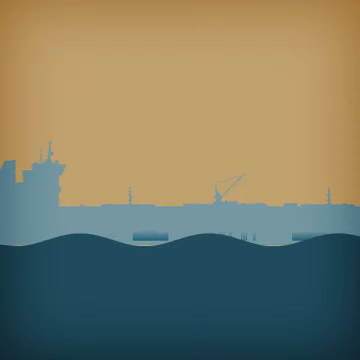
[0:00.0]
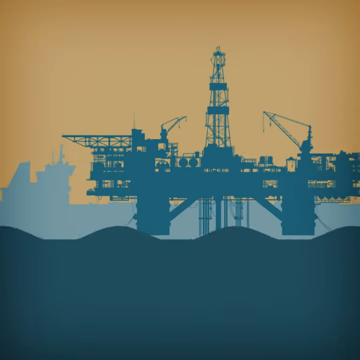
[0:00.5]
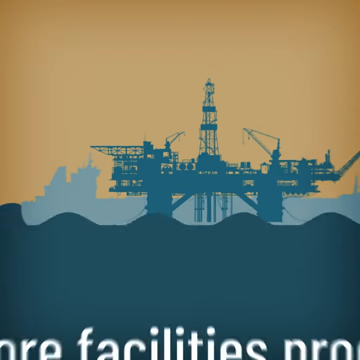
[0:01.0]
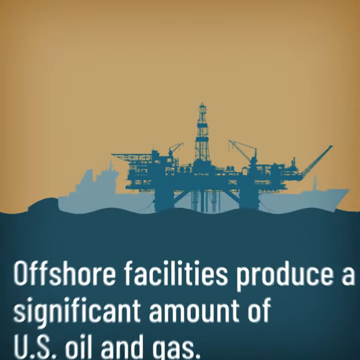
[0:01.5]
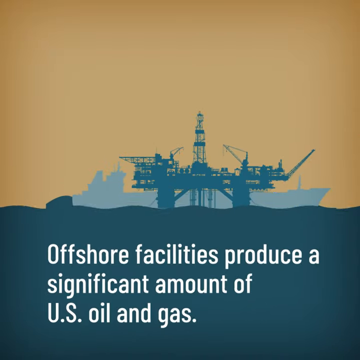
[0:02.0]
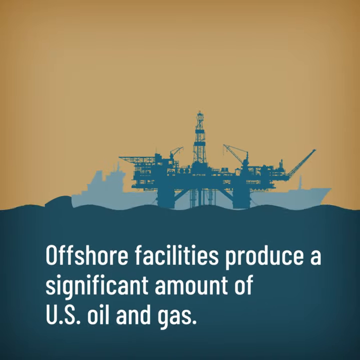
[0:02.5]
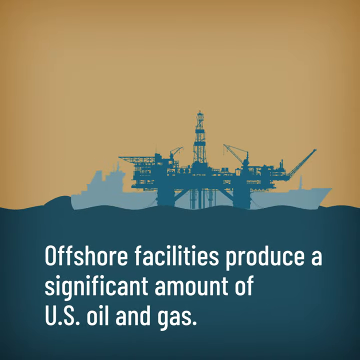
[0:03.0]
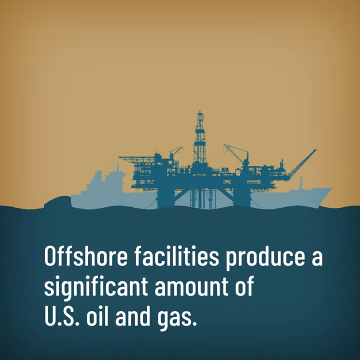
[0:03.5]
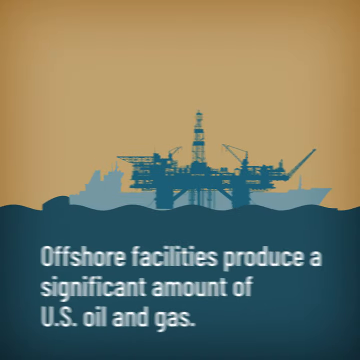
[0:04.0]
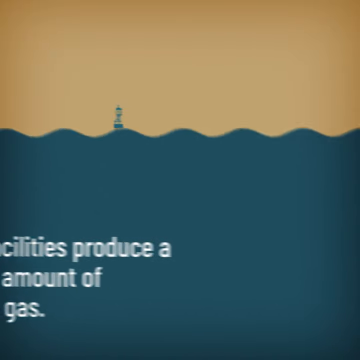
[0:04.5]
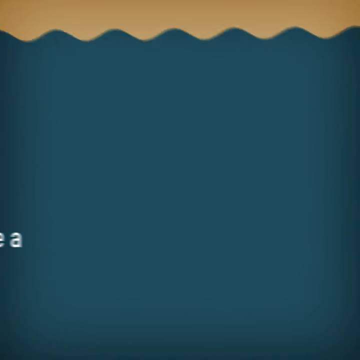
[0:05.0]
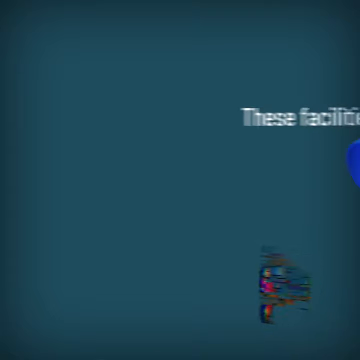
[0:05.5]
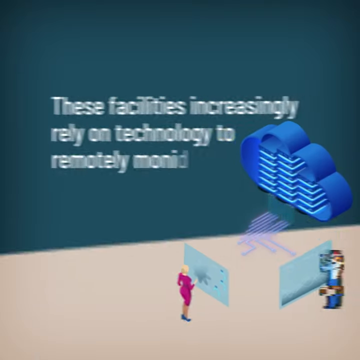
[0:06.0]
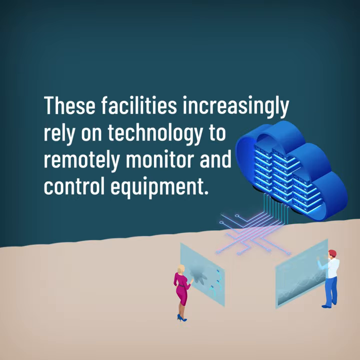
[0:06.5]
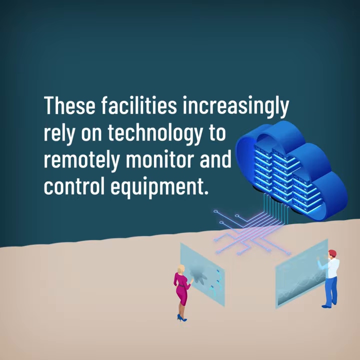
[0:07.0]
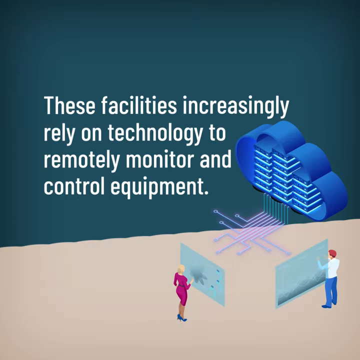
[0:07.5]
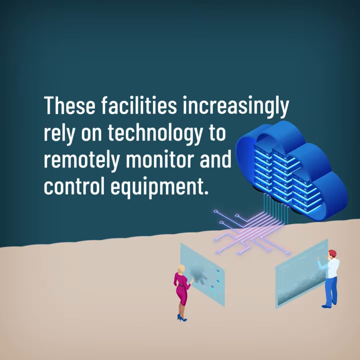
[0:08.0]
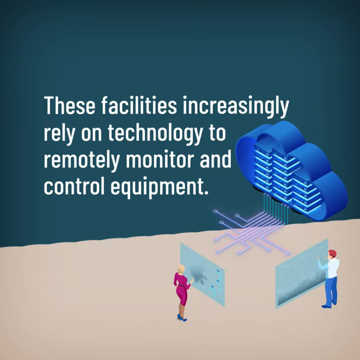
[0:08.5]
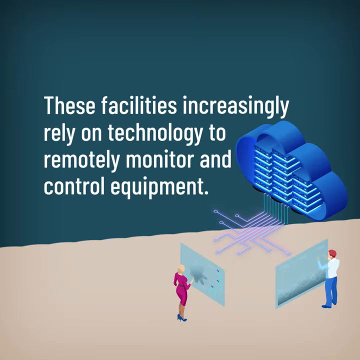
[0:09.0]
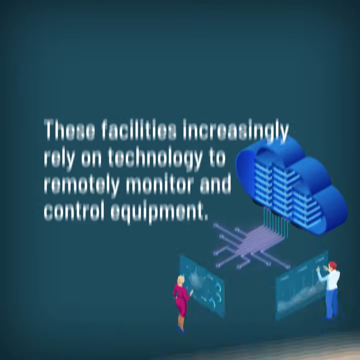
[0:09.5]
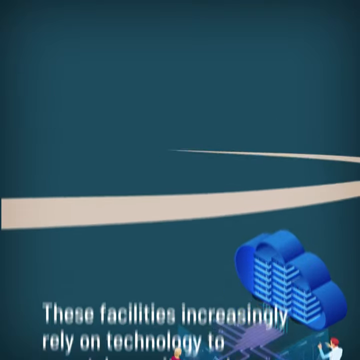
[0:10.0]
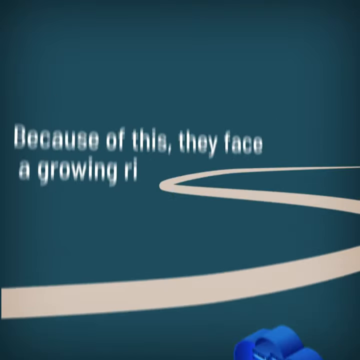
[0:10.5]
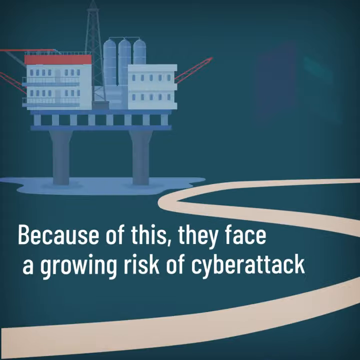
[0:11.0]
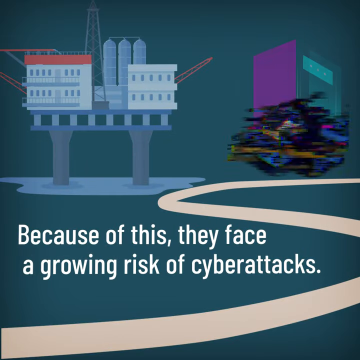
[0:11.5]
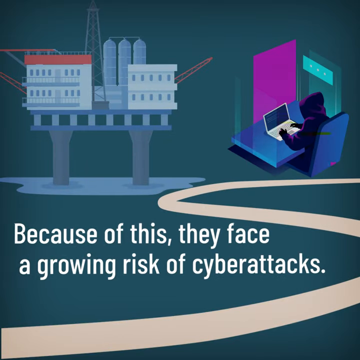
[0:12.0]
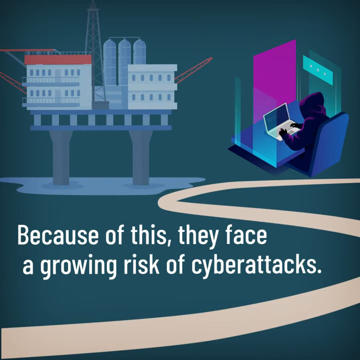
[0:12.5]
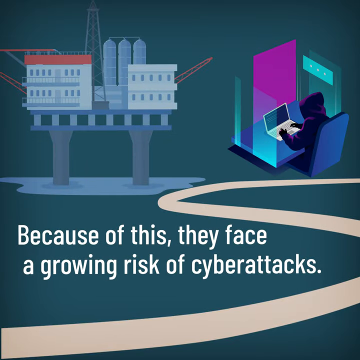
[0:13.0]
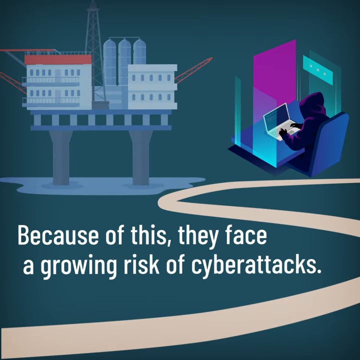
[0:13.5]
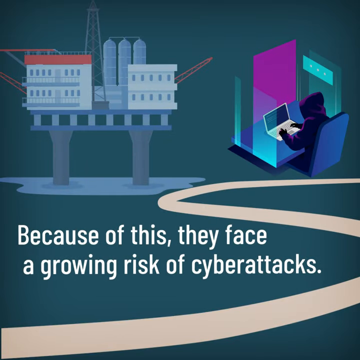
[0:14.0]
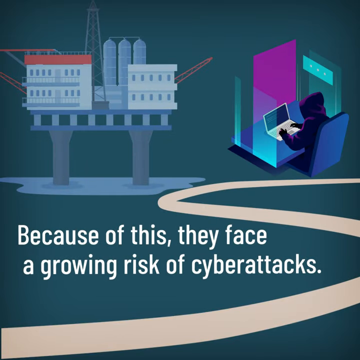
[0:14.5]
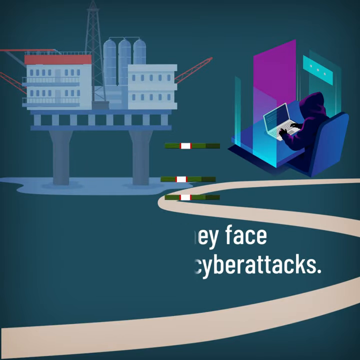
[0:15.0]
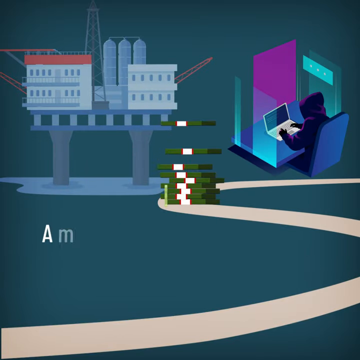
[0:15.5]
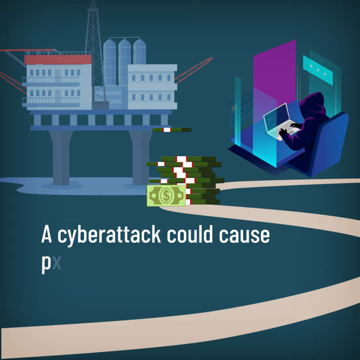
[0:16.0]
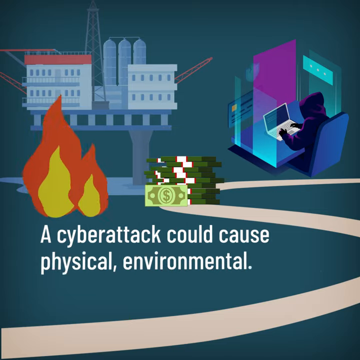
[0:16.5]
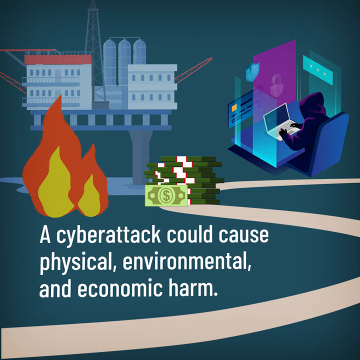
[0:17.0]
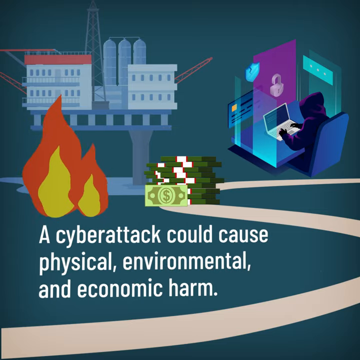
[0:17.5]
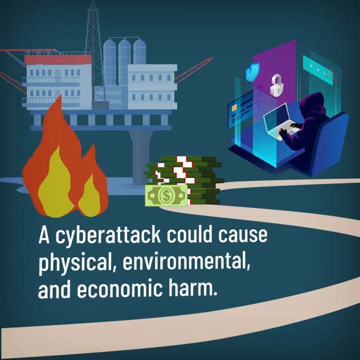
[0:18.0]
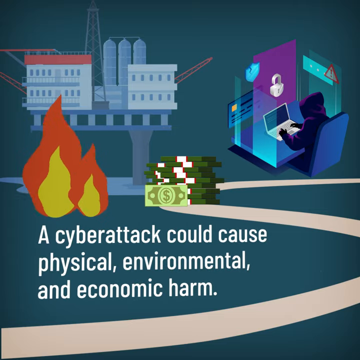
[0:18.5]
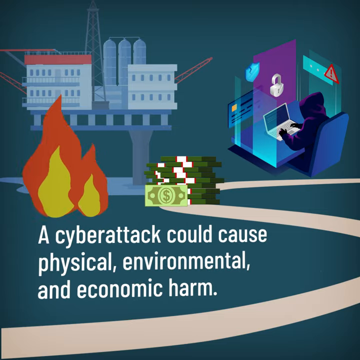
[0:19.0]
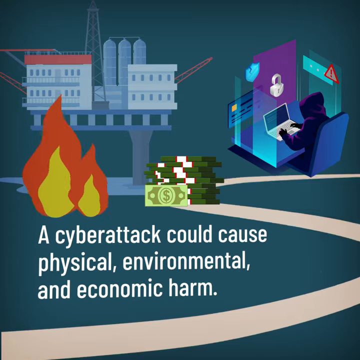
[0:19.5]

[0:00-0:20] An animation opens with an image of what looks like an oil rig floating on top of the water, with the words "offshore facilities produce a significant amount of U.S. oil and gas." It switches to an animation that says "these facilities increasingly rely on technology to remotely monitor and control equipment," showing people at the bottom. An oil rig is then shown again sitting on top of the water, with text that says "because of this they face a growing risk of cyber attacks." There is sort of a little road, and text says "a cyber attack could cause physical, environmental and economic harm." A big stack of money is on the right-hand side, and a big fire is going underneath the oil rig. The animation then switches to a static image showing something industrial.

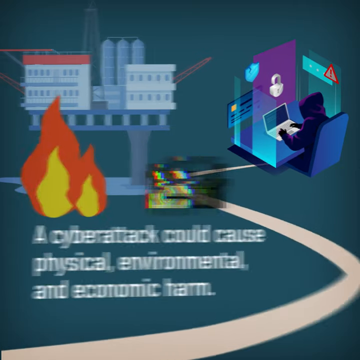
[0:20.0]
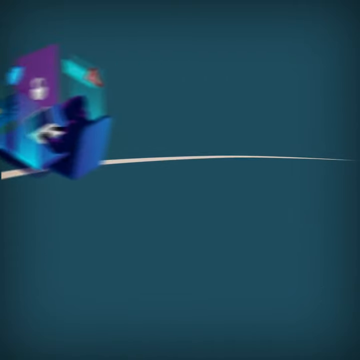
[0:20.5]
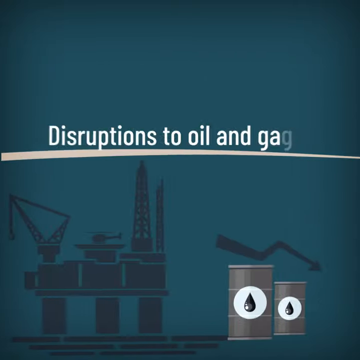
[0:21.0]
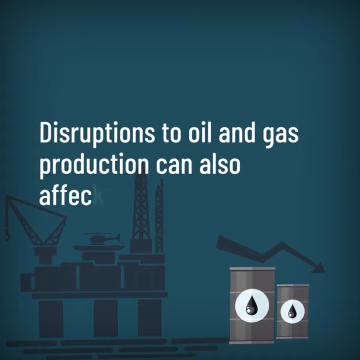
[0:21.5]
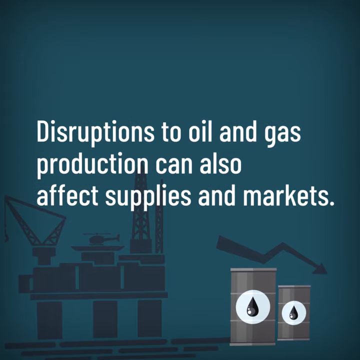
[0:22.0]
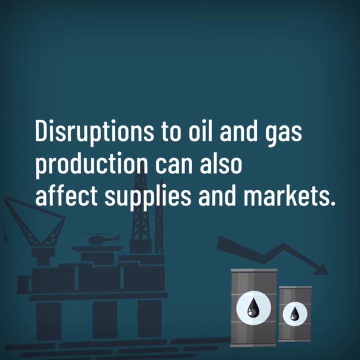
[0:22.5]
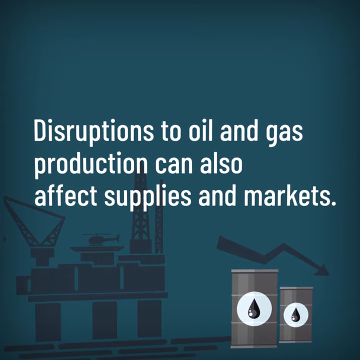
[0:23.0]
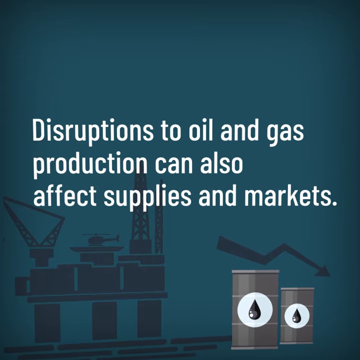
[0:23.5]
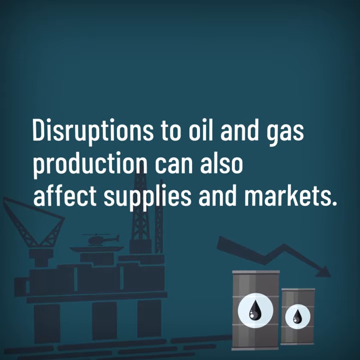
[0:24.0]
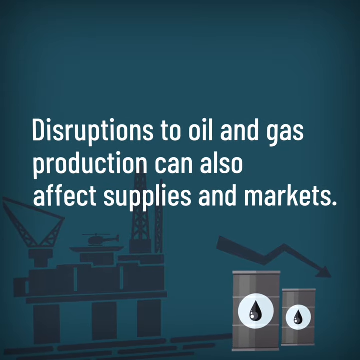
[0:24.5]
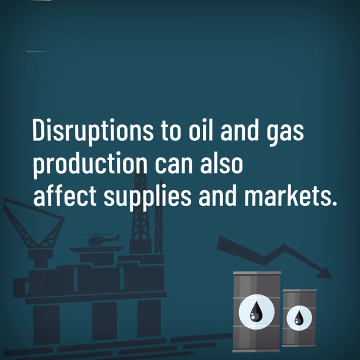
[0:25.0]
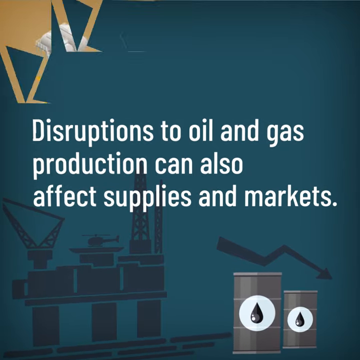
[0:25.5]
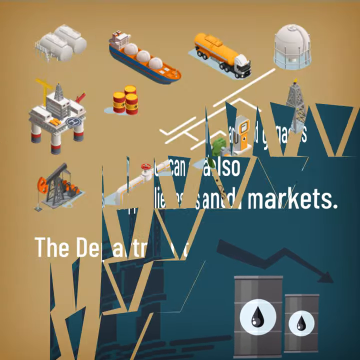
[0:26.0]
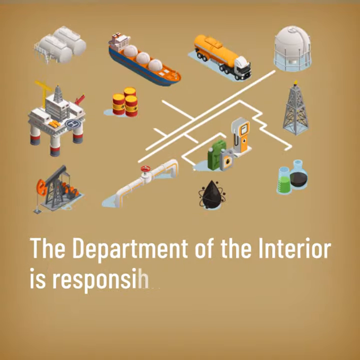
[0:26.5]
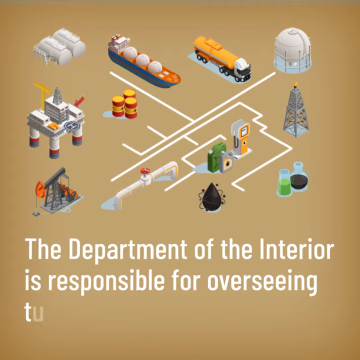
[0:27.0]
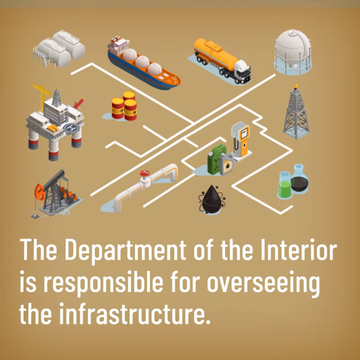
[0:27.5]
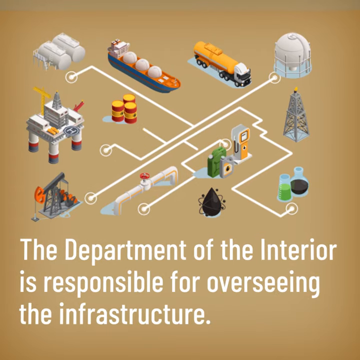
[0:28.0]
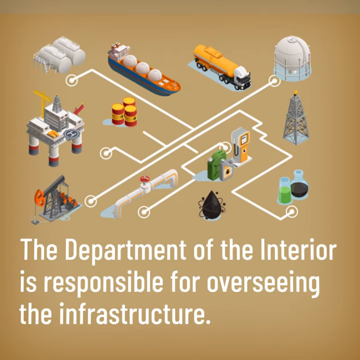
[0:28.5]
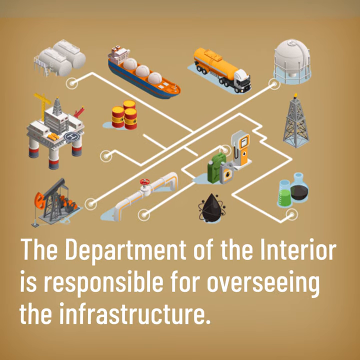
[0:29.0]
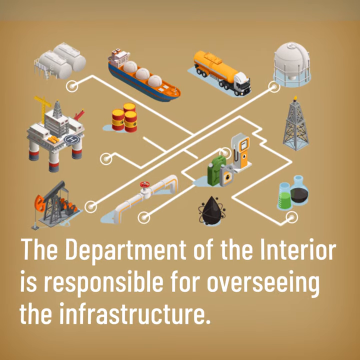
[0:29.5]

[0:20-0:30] The animation continues with text that says "disruptions to oil and gas production can also affect supplies and markets," moving very fast. Sort of a graph shows a downward trend over the top of what appear to be oil barrels. It then switches to an image with text saying "the Department of Interior is responsible for overseeing the infrastructure," showing a lot of infrastructure, including many trucks and big oil tankers.